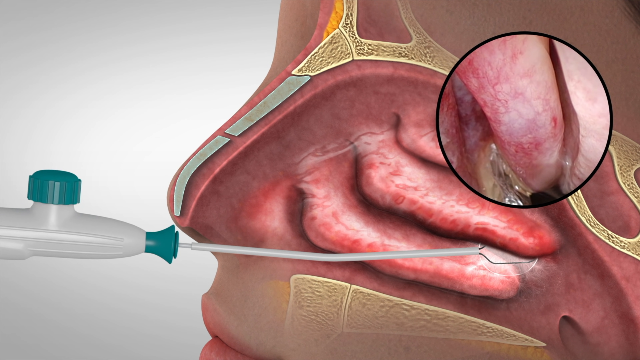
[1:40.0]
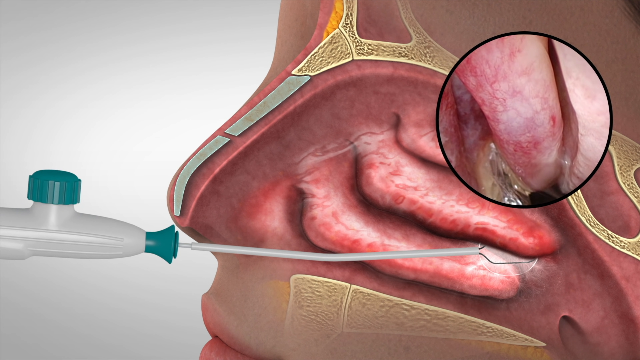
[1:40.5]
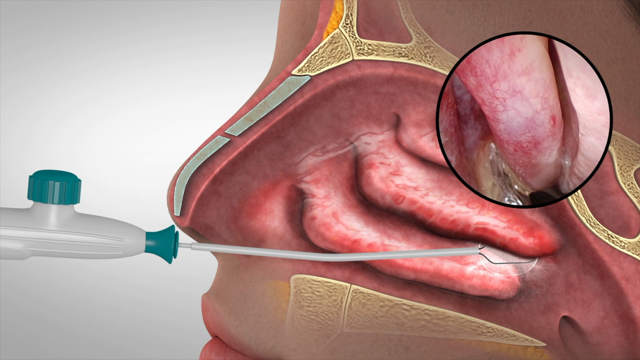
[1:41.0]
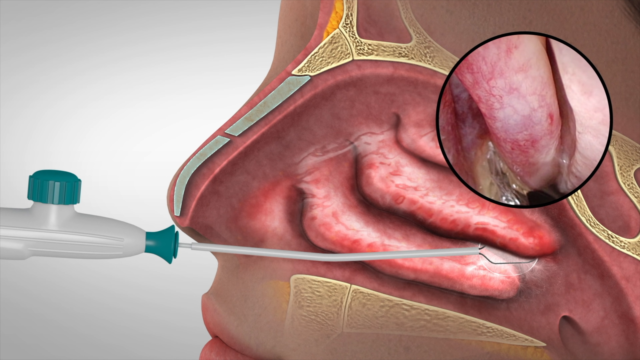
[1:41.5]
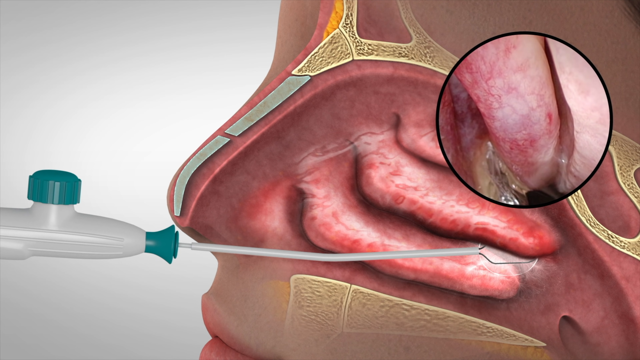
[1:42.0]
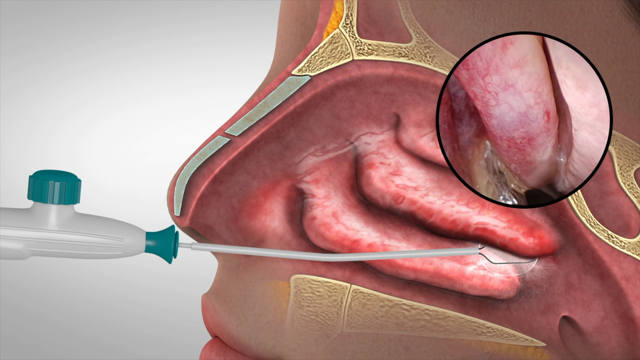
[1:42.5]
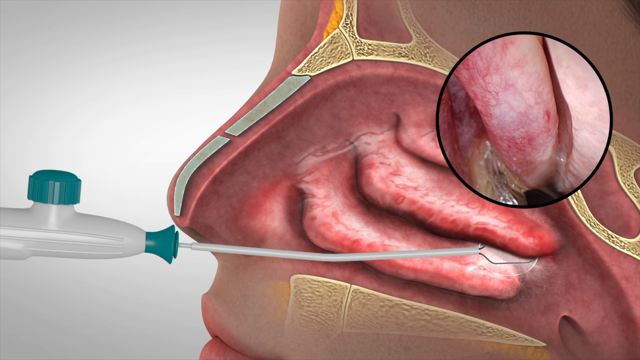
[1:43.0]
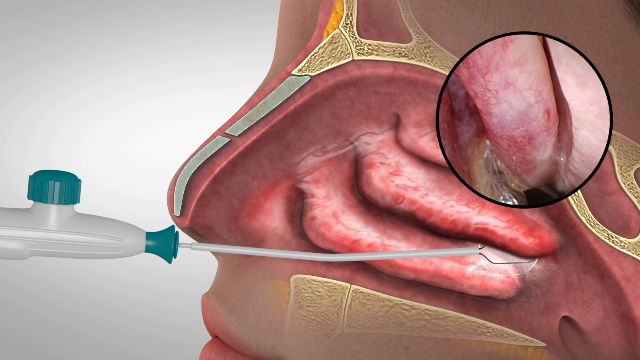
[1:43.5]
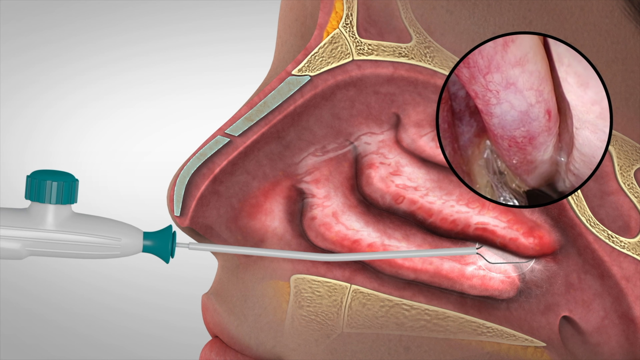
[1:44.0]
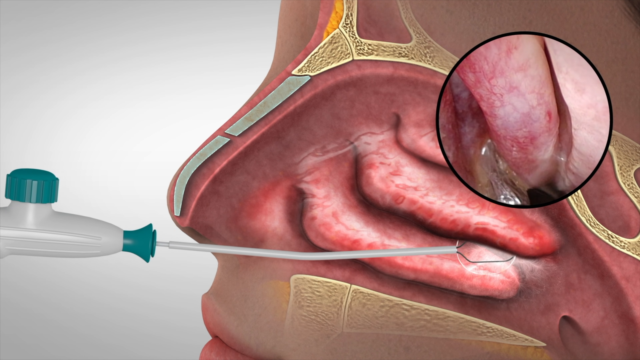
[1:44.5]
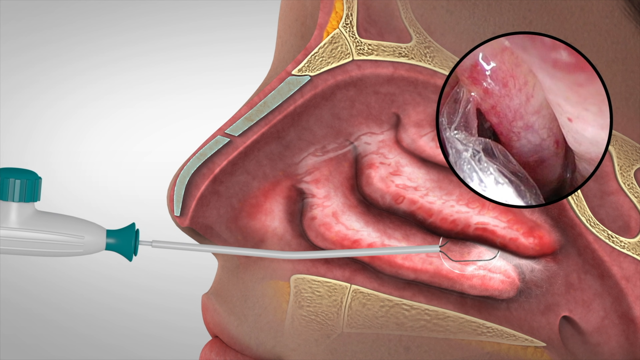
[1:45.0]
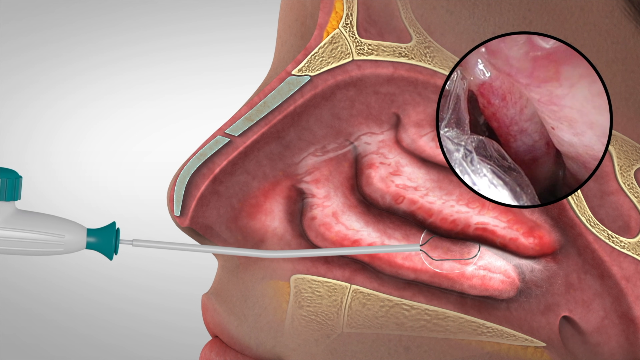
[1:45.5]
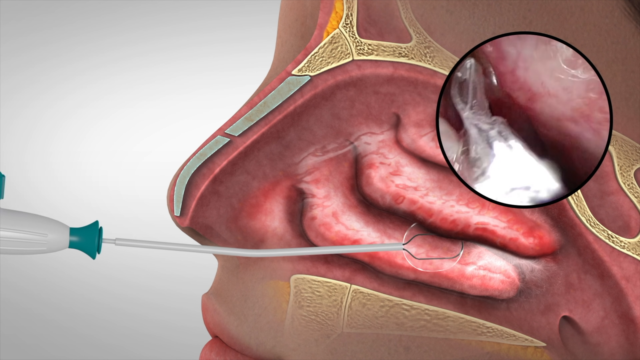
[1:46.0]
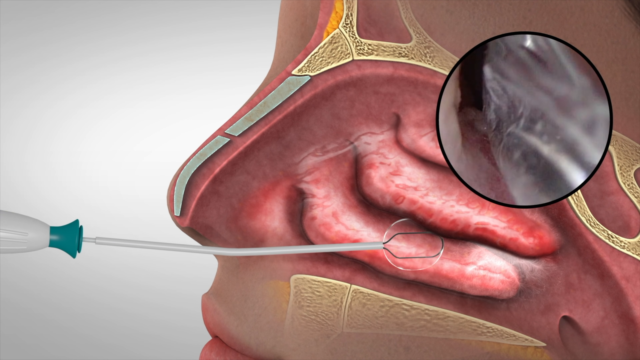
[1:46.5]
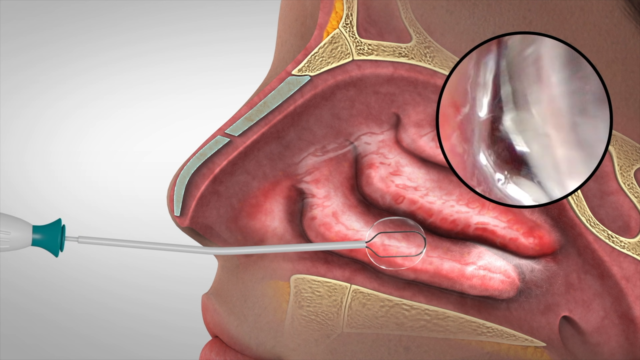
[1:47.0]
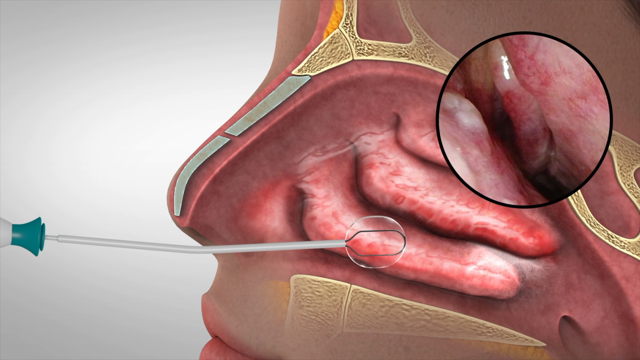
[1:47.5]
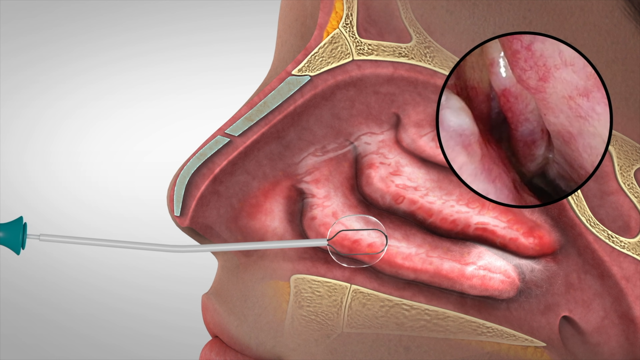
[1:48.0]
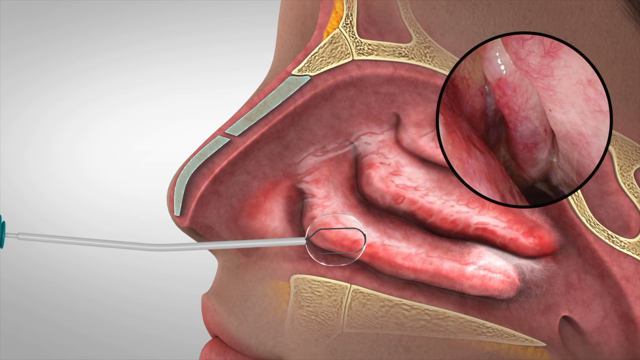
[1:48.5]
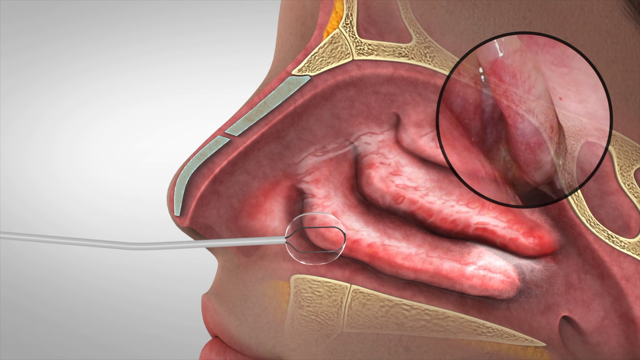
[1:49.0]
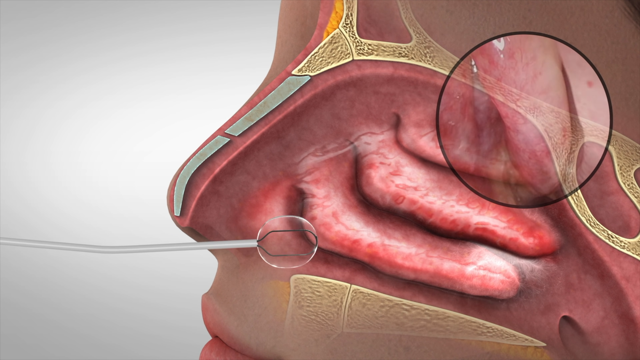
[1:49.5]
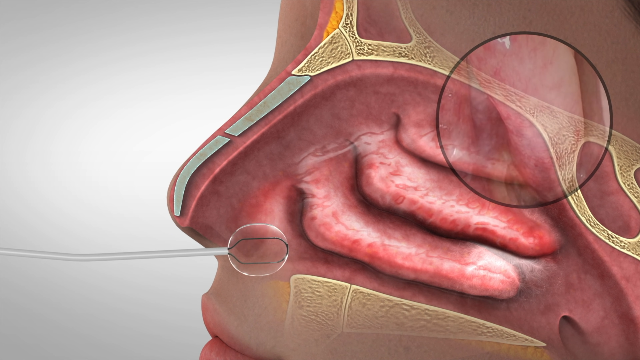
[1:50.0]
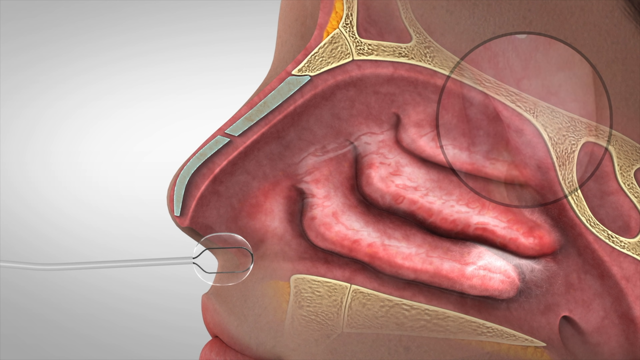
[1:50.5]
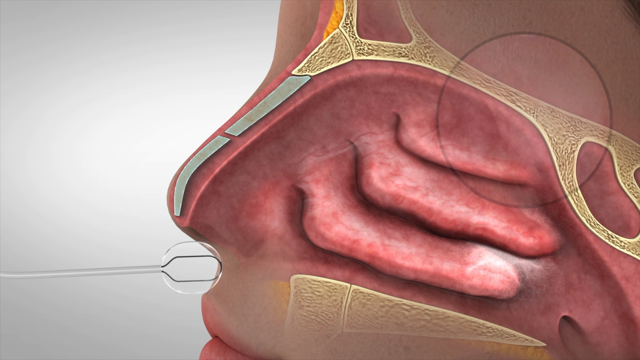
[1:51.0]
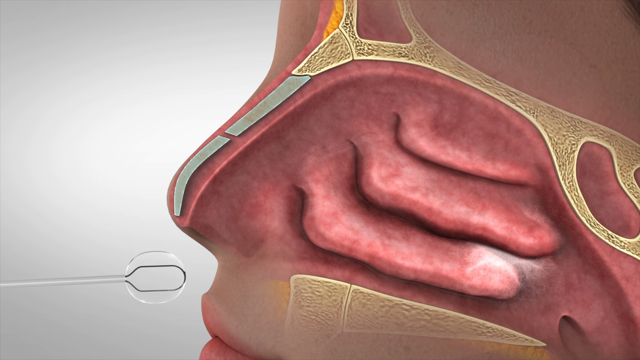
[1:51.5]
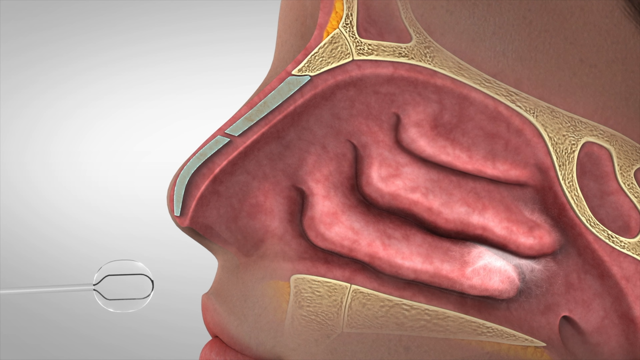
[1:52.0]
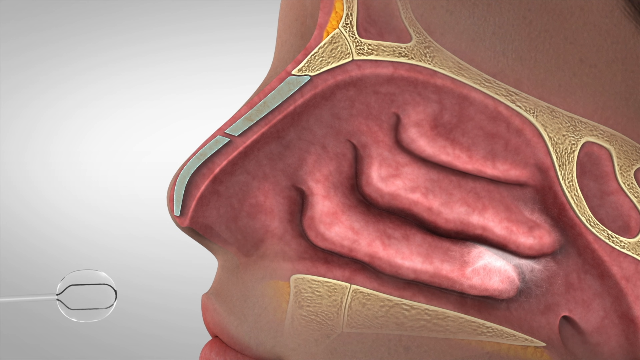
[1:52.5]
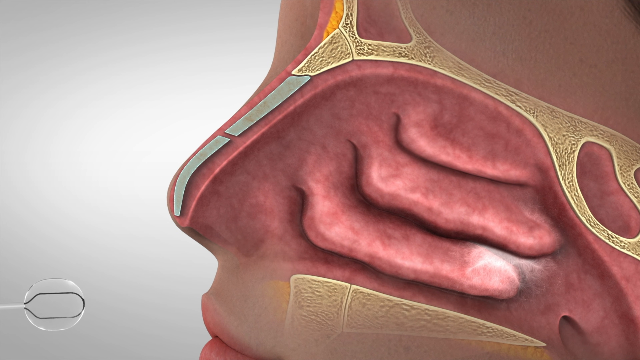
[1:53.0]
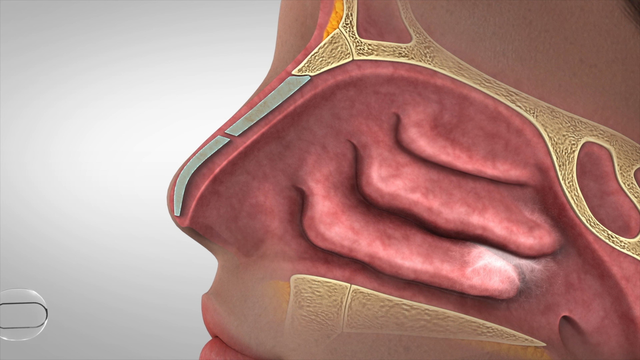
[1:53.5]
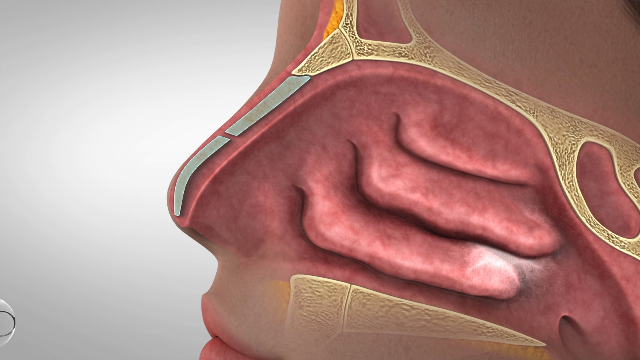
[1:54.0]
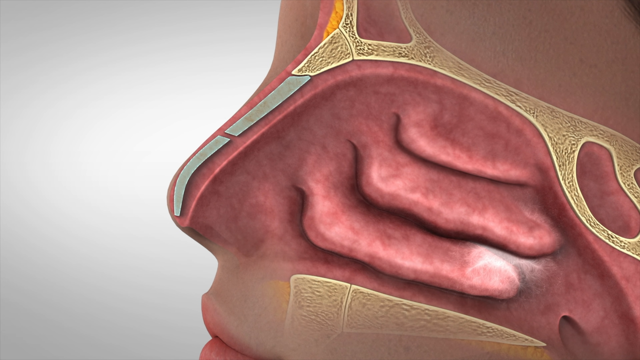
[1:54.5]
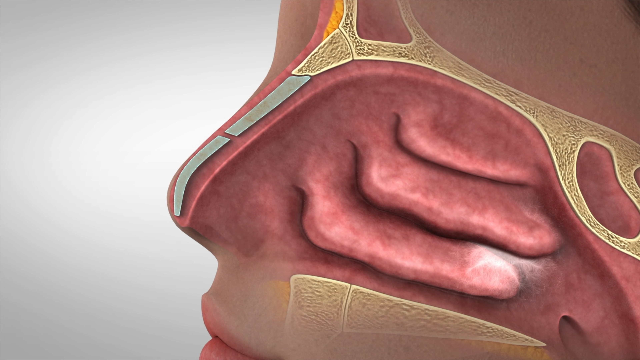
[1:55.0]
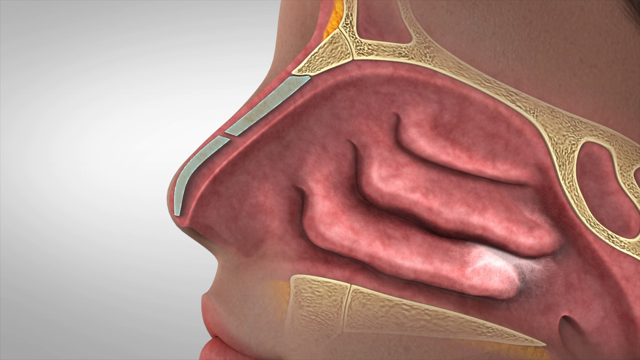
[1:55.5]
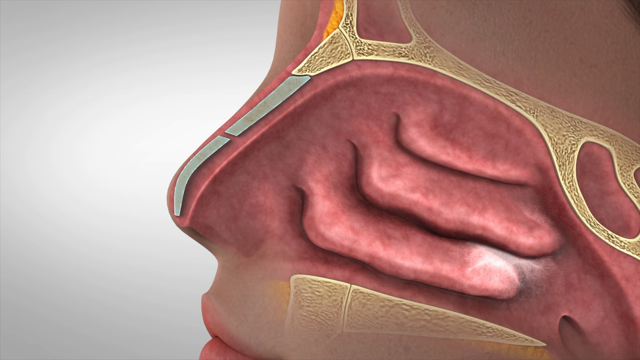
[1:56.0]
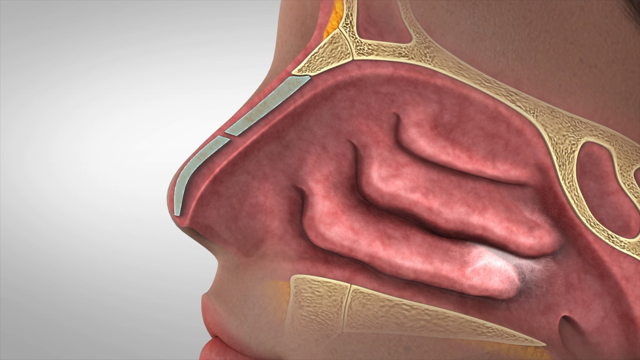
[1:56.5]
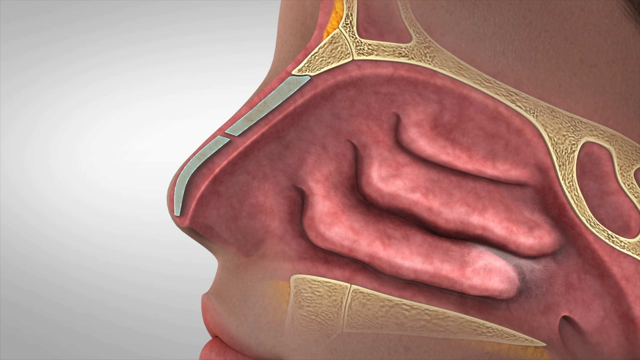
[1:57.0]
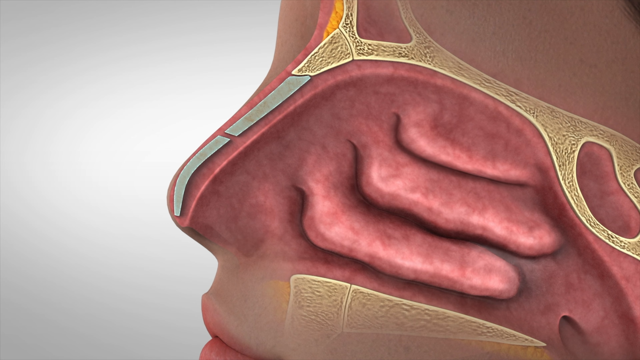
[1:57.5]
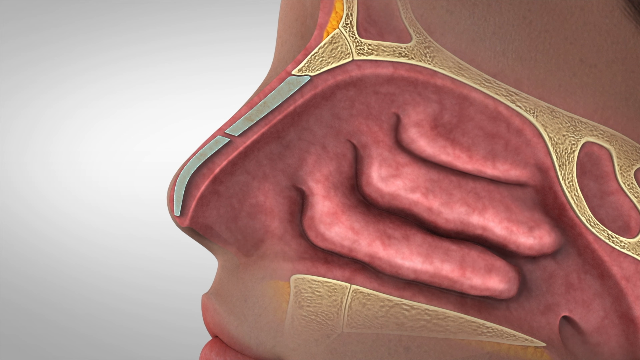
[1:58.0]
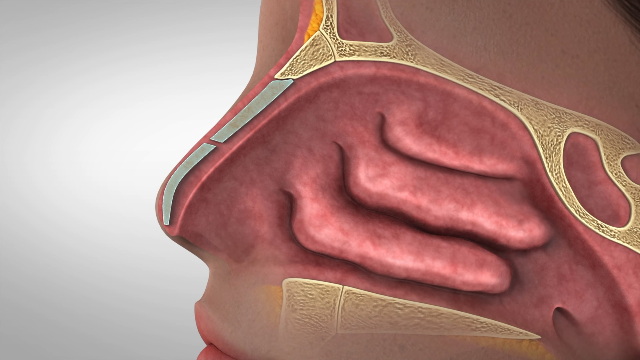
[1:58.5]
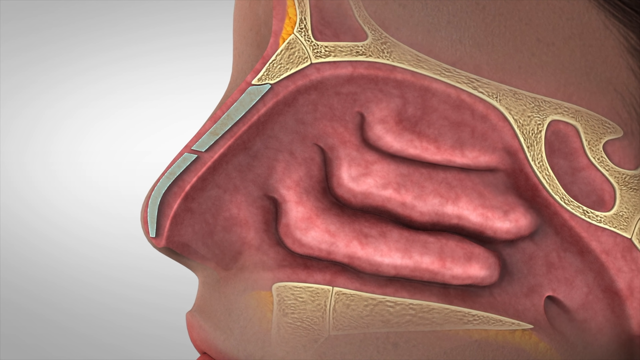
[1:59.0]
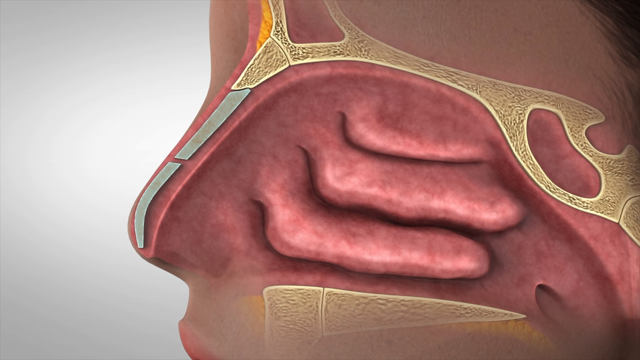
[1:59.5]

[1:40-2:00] The device exits the person's nose, and it looks a bit tall for the nostril. The swab slowly pulls out of the nostril, leaving the graphic of the woman. The graphic does not change except for a slight tilt and angle of the camera, and the Clarifix device fully exits the screen, leaving only the diagram of this part of the respiratory system.